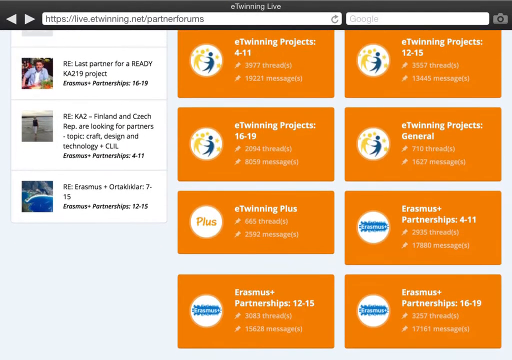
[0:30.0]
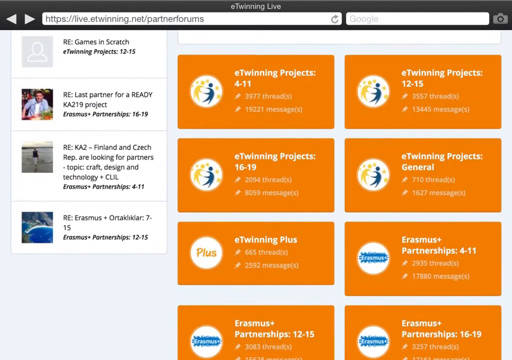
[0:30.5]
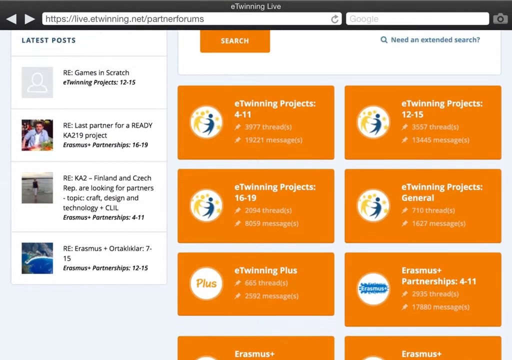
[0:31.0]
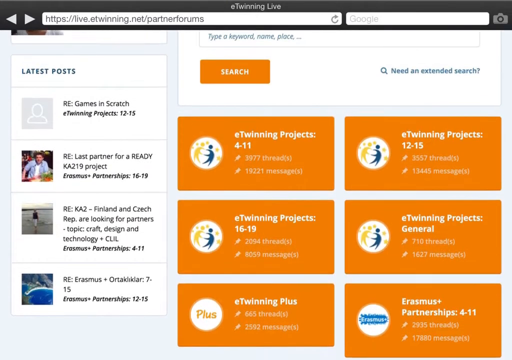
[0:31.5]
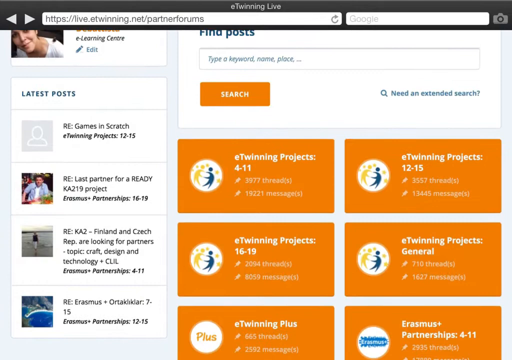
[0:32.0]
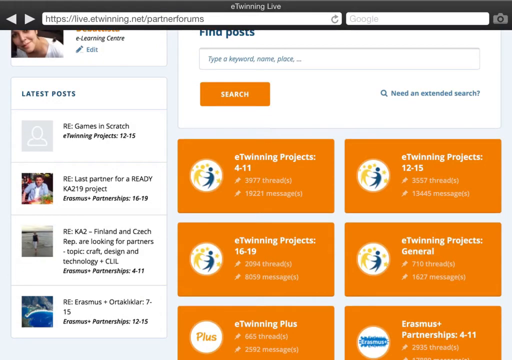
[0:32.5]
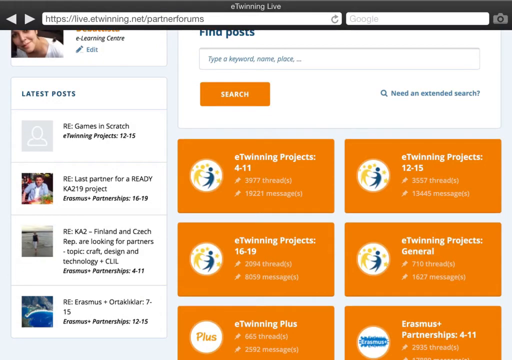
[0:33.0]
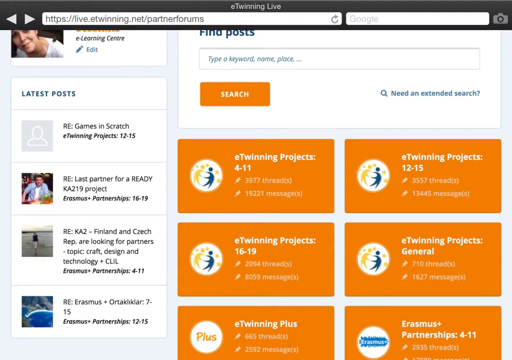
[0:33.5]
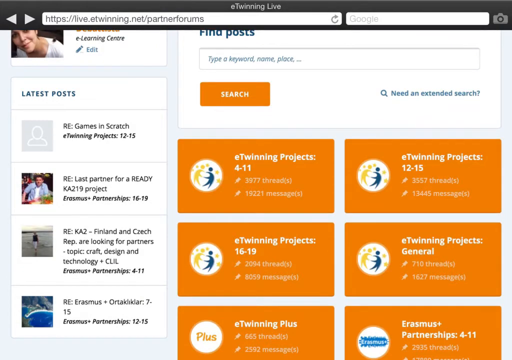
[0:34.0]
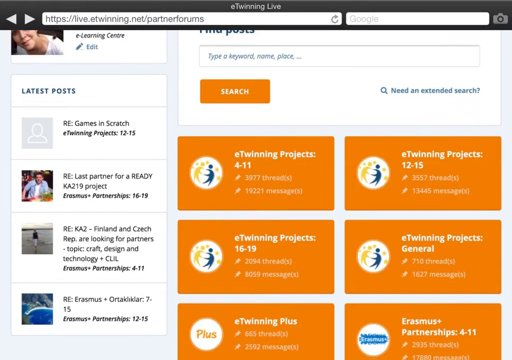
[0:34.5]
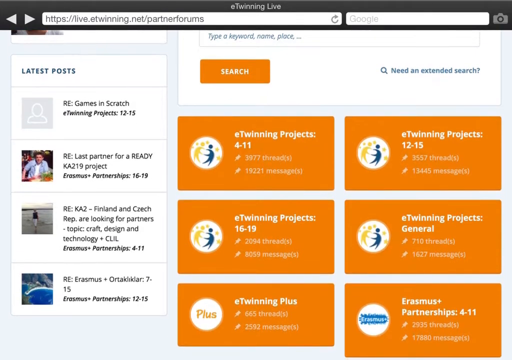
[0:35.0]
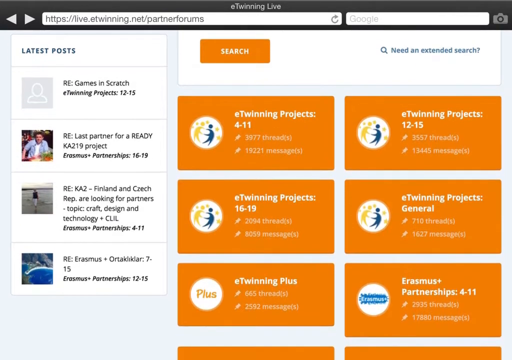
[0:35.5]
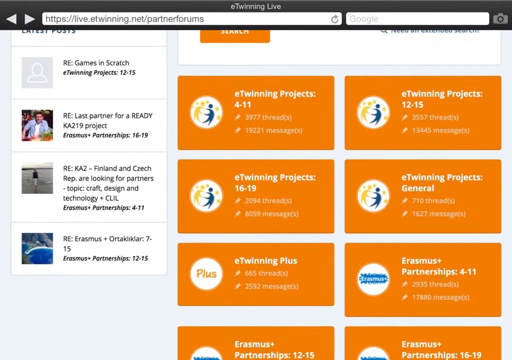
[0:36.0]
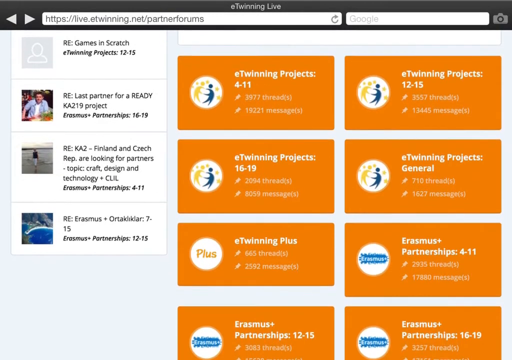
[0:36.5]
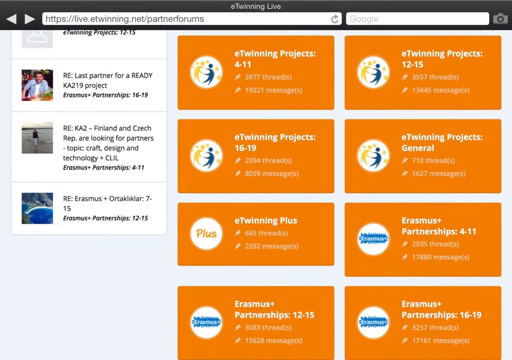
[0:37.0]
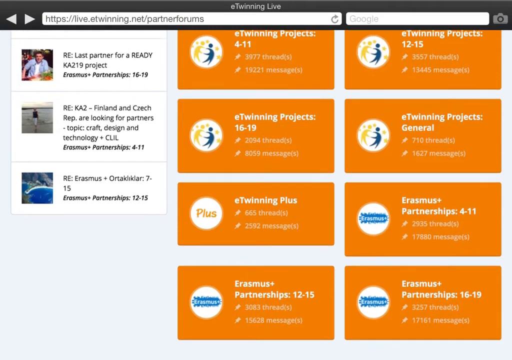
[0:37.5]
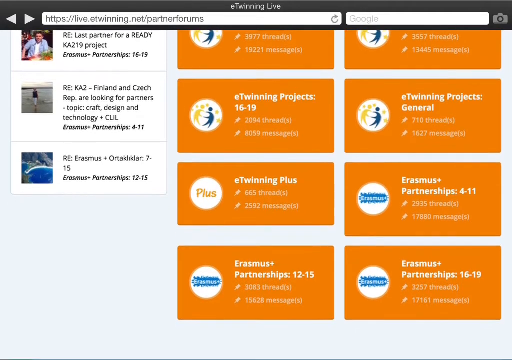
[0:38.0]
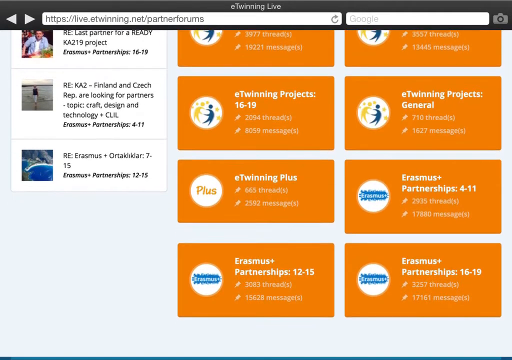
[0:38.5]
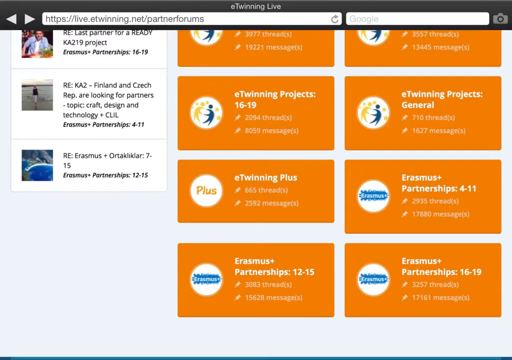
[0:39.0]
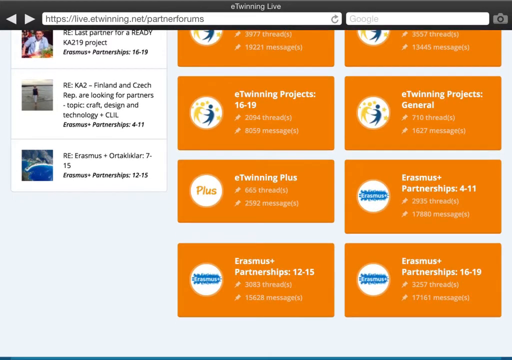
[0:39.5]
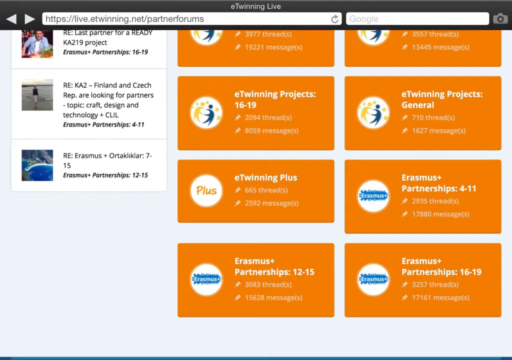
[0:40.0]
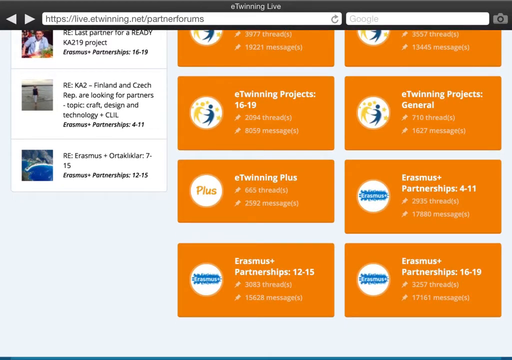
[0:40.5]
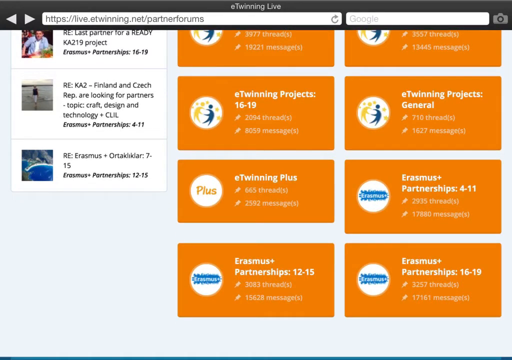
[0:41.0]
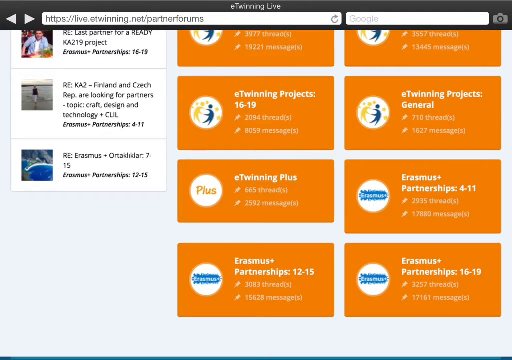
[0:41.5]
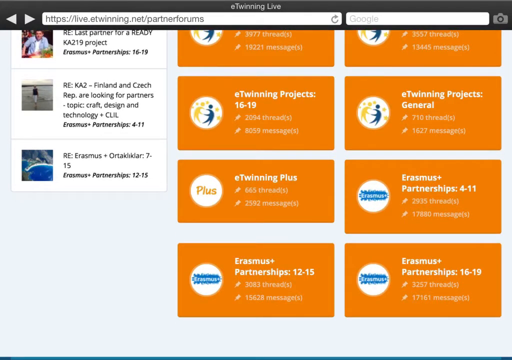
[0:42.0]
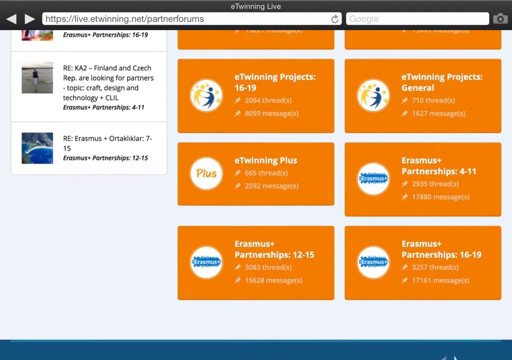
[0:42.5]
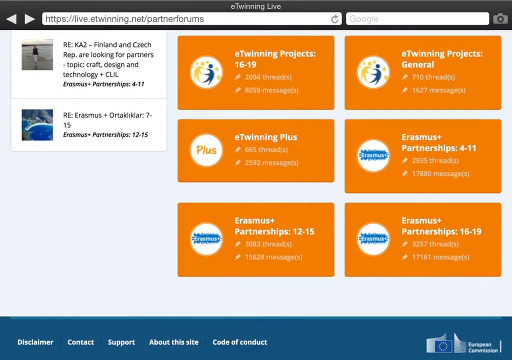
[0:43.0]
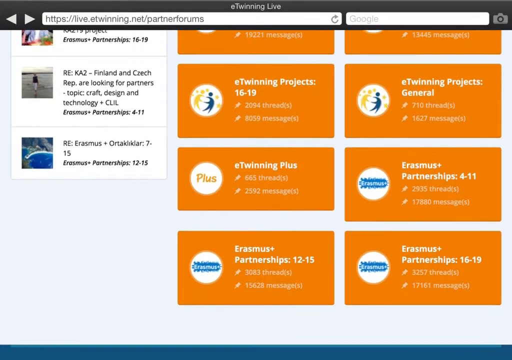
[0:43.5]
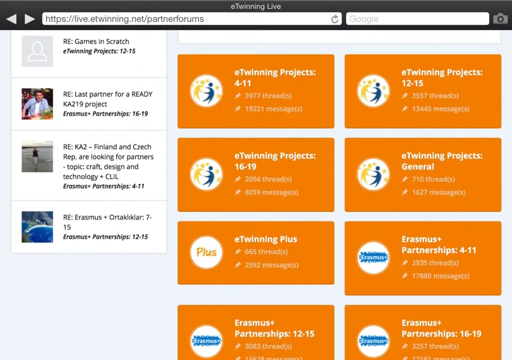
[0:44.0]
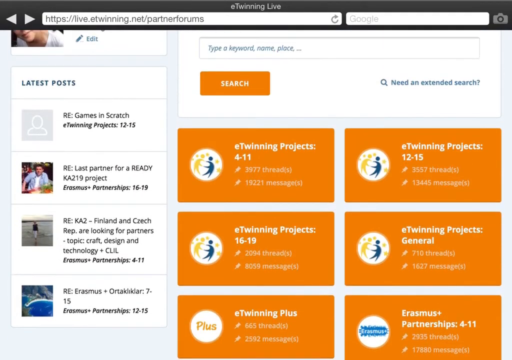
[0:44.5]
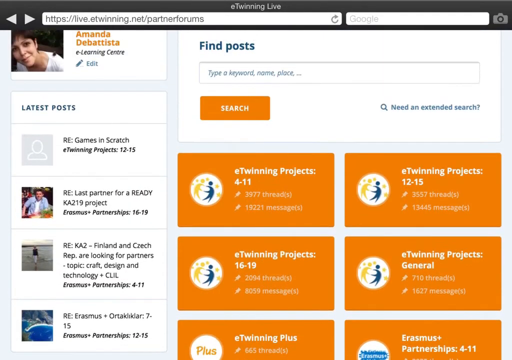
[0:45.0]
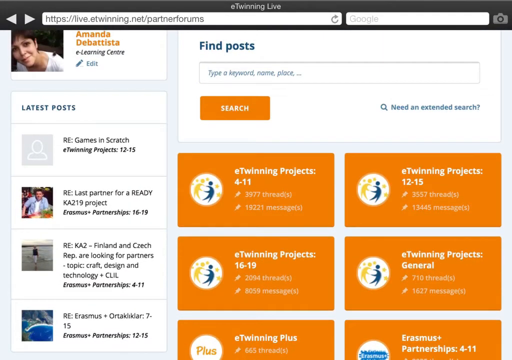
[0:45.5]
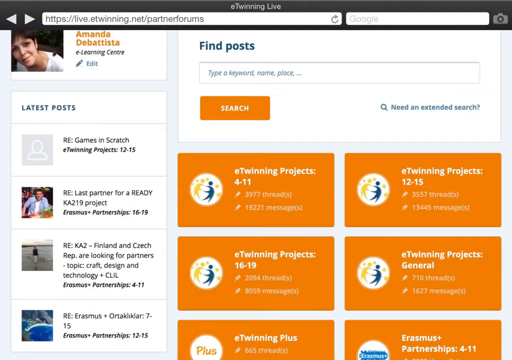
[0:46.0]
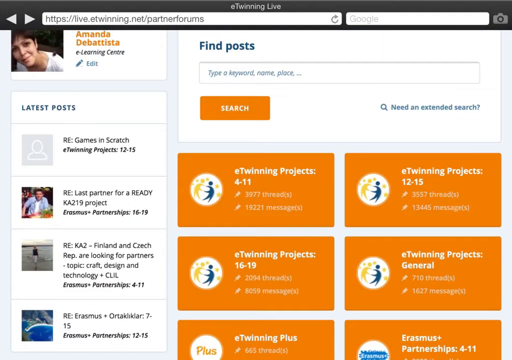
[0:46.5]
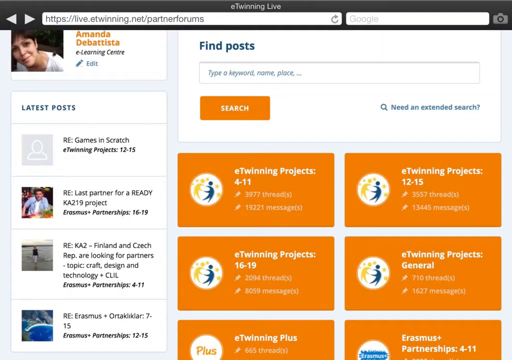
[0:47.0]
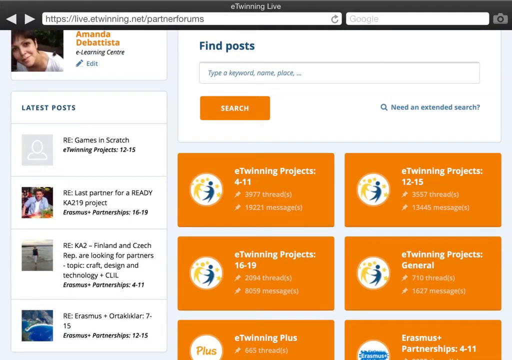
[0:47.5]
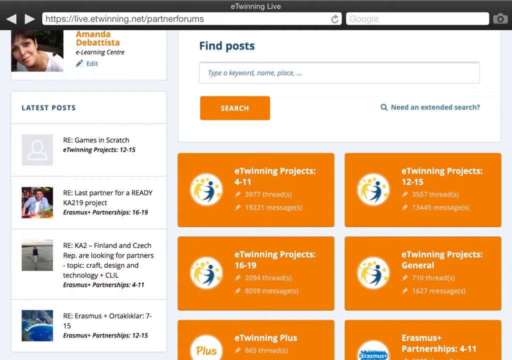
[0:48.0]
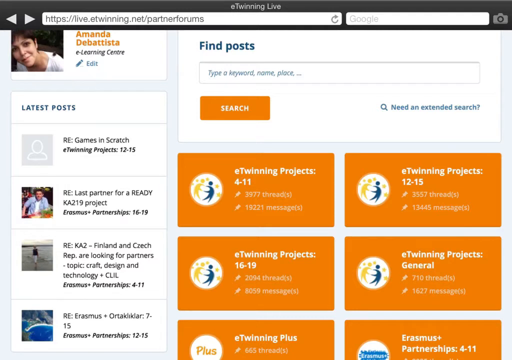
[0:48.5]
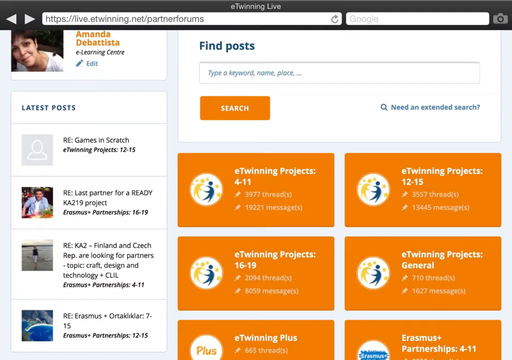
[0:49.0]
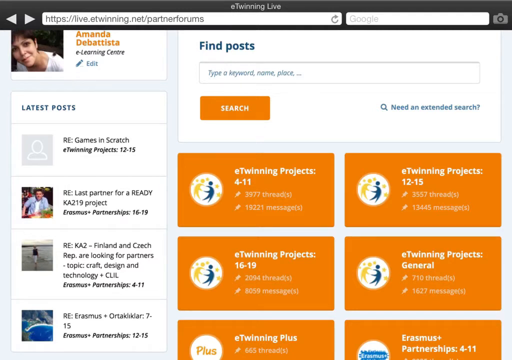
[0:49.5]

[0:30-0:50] The homepage of live.etwinning.net/partner forums is shown, and the user scrolls slowly up and down it. The page has orange buttons for different subjects, such as "eTwinning projects", "4-11", "12-15", "16-19" and "general". On the left side of the homepage there seems to be a section for the latest posts, including ones about "games in Scratch" and "last partner for a ready project". The page belongs to Anda DePatista, who scrolls slowly down, apparently browsing the offerings, and then scrolls right back up, looking idly at the page. There is also a small search bar on the homepage that says "Find Posts", where a keyword, name or place can be typed in.